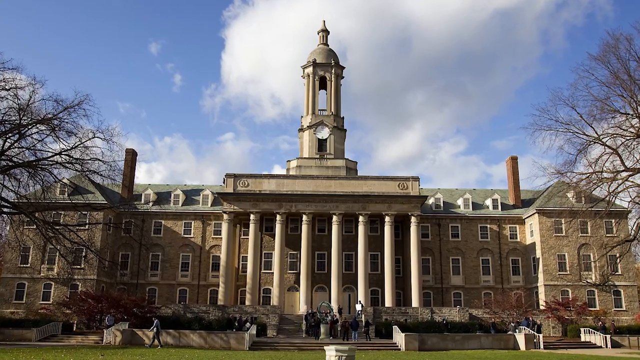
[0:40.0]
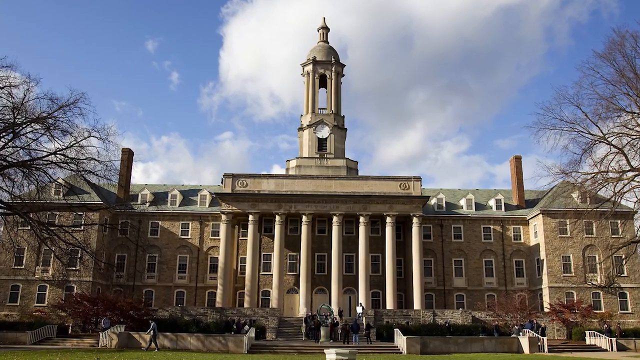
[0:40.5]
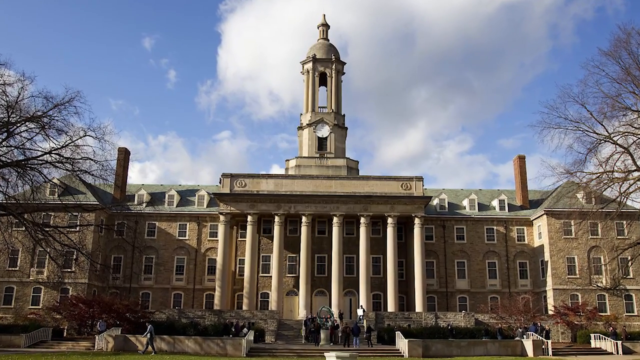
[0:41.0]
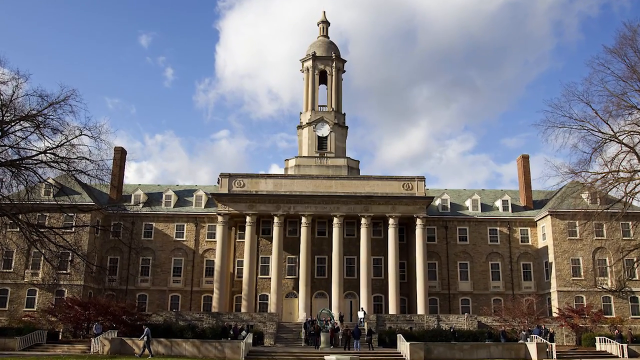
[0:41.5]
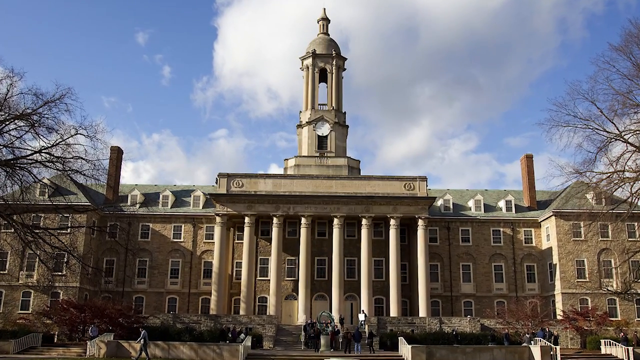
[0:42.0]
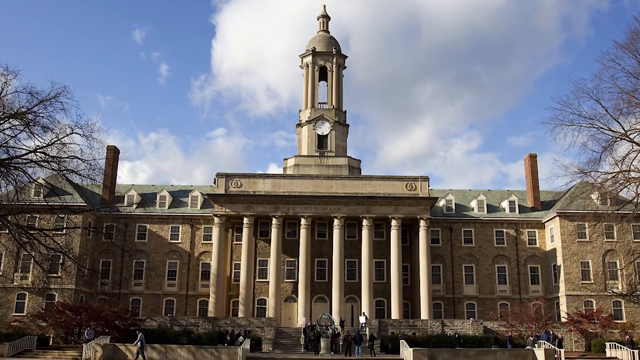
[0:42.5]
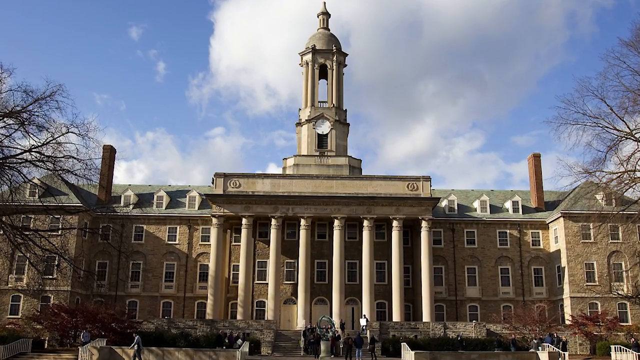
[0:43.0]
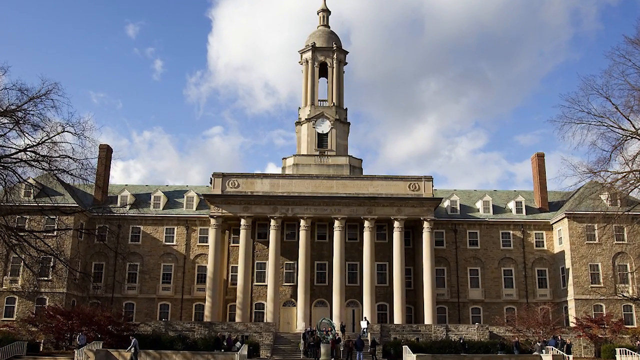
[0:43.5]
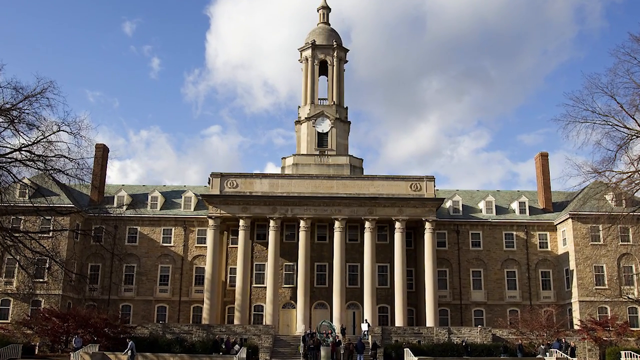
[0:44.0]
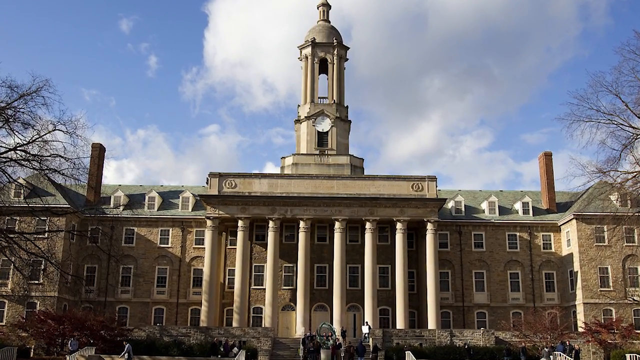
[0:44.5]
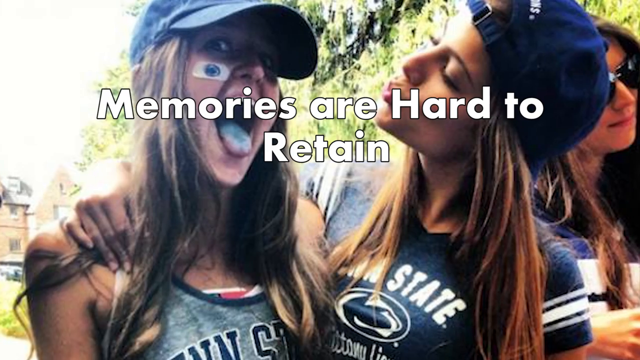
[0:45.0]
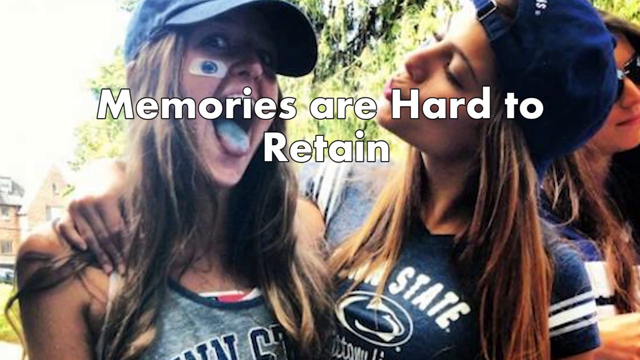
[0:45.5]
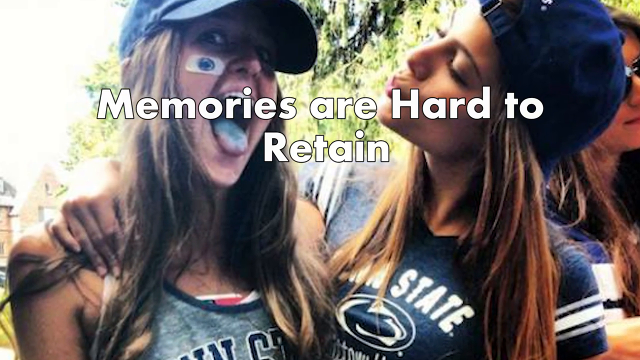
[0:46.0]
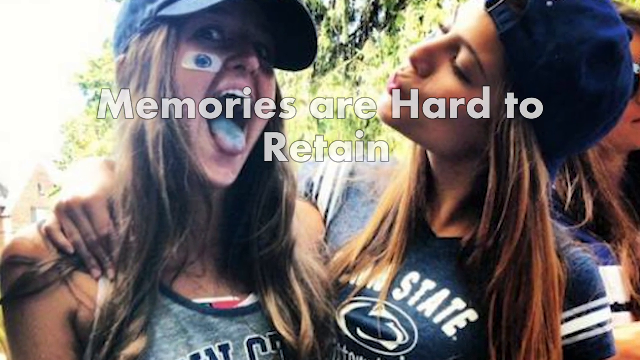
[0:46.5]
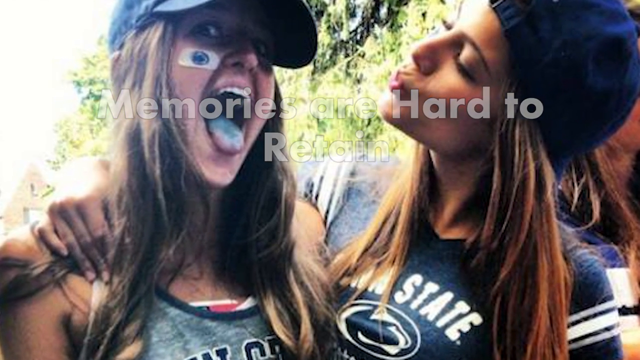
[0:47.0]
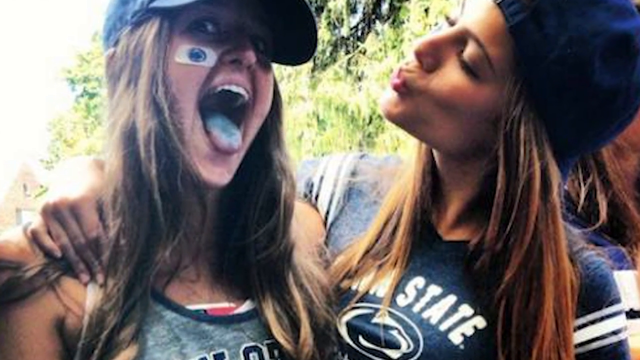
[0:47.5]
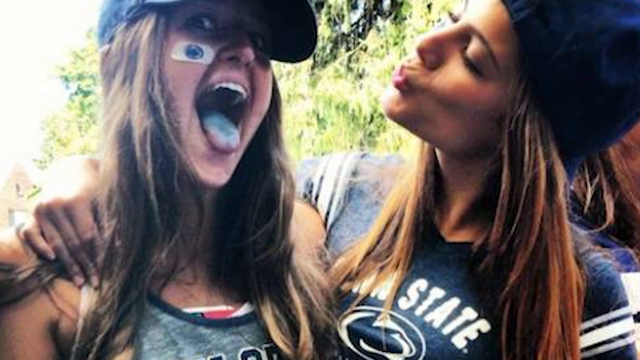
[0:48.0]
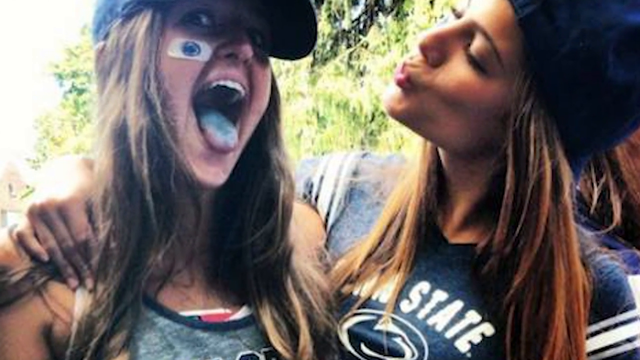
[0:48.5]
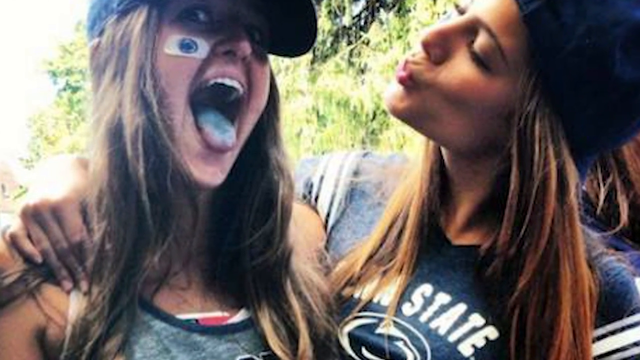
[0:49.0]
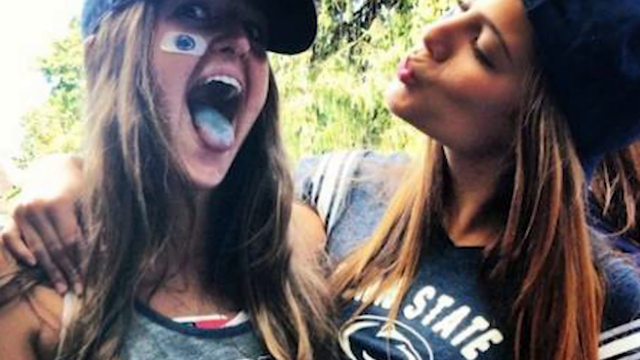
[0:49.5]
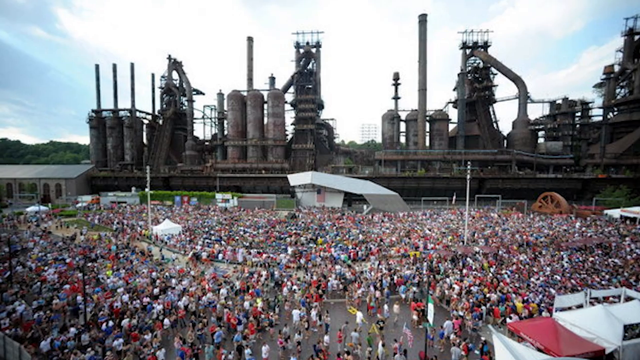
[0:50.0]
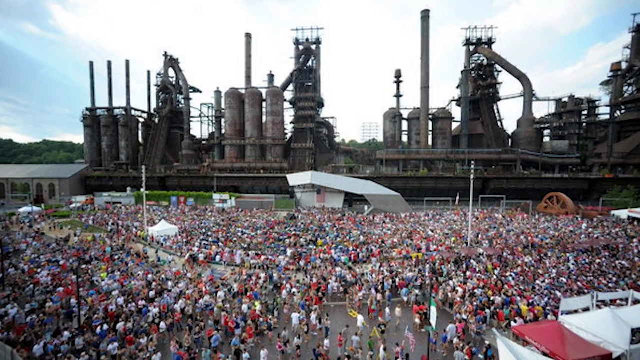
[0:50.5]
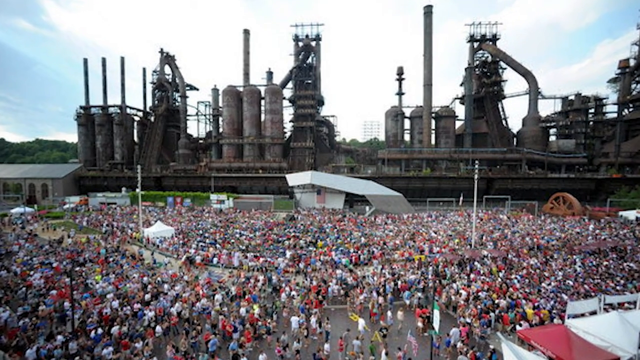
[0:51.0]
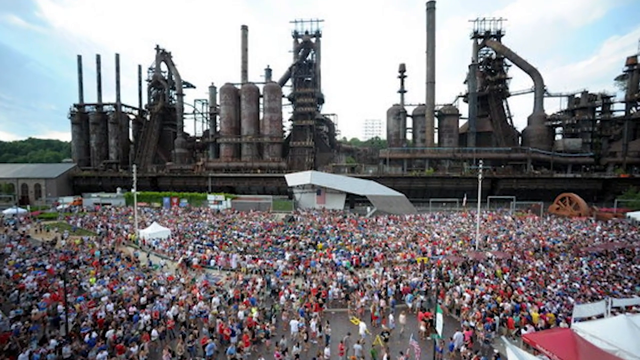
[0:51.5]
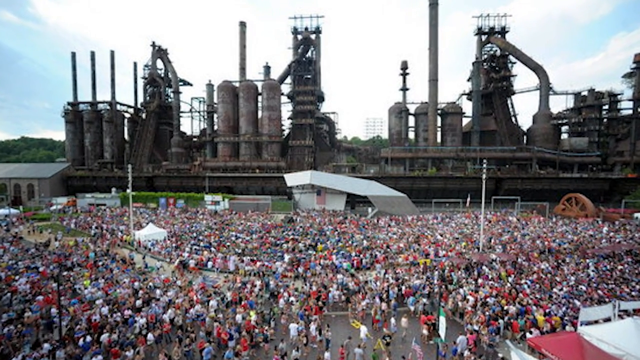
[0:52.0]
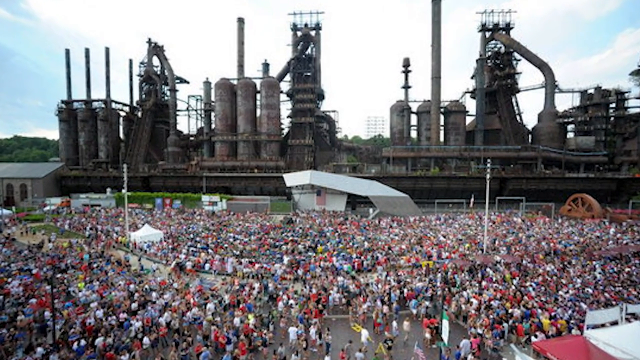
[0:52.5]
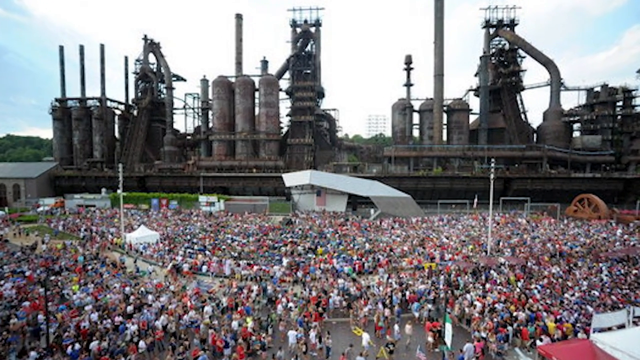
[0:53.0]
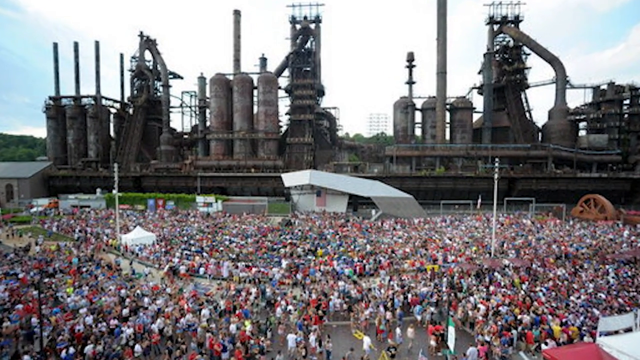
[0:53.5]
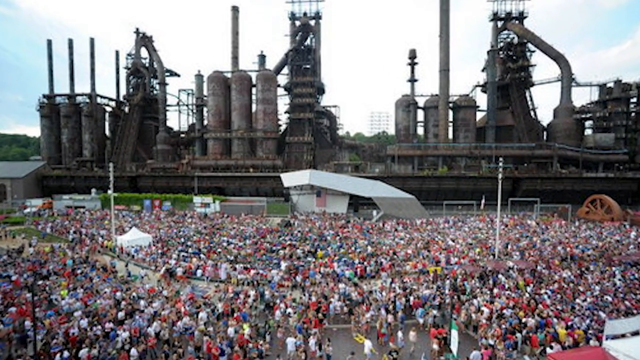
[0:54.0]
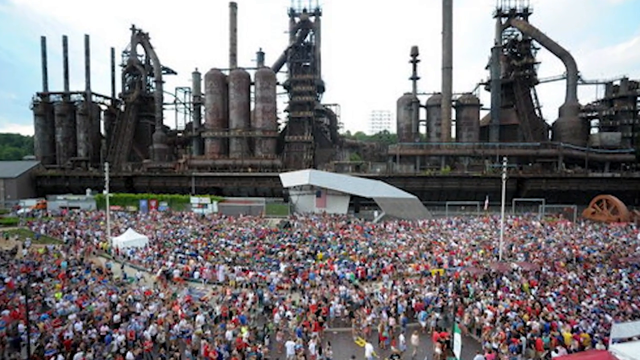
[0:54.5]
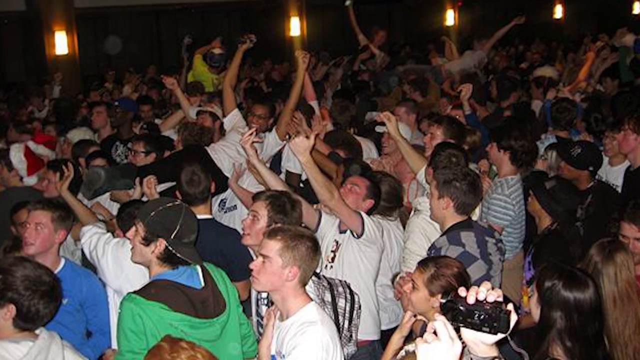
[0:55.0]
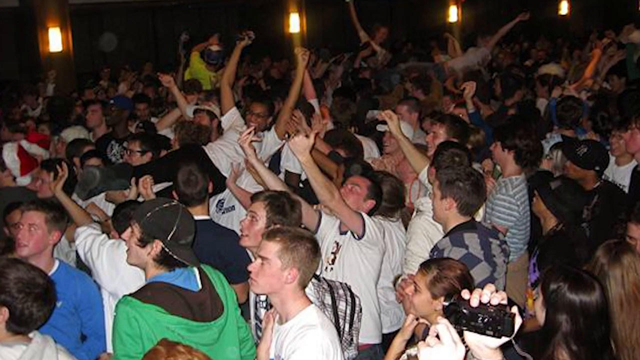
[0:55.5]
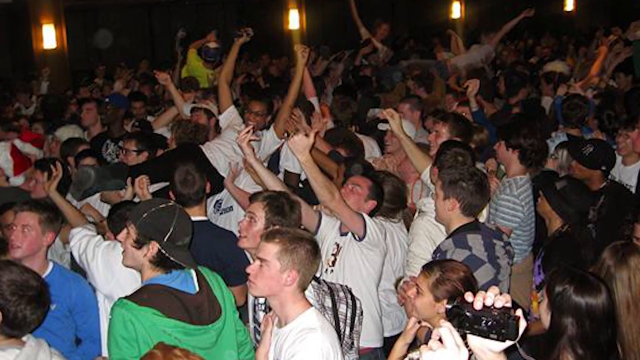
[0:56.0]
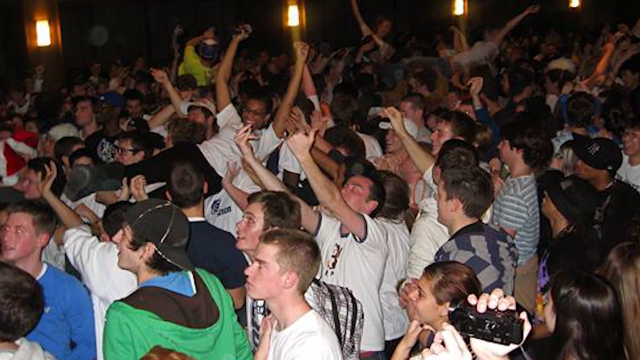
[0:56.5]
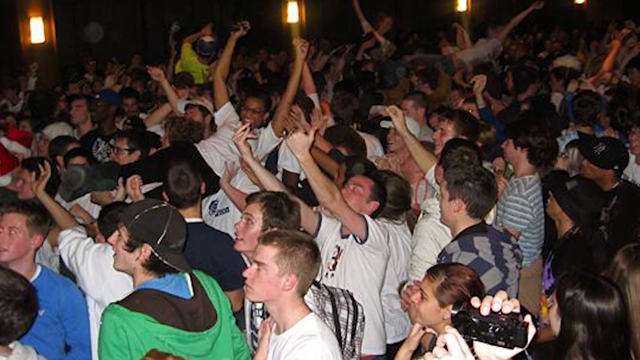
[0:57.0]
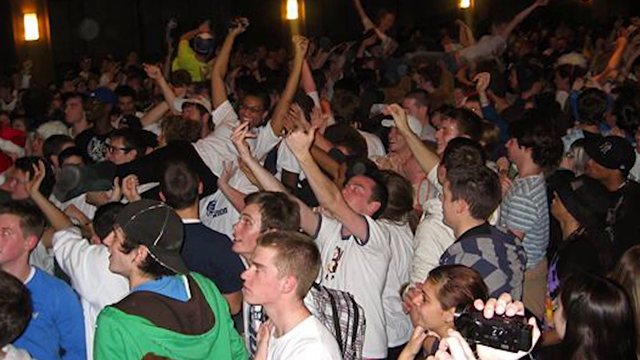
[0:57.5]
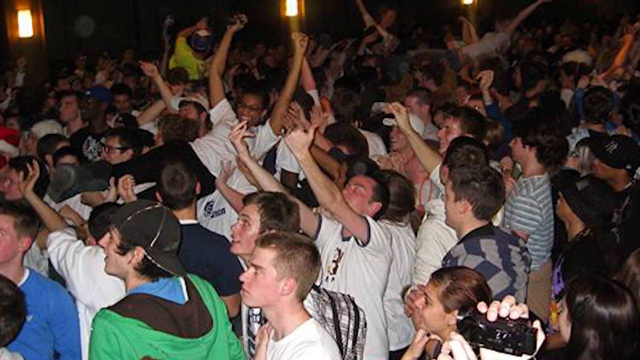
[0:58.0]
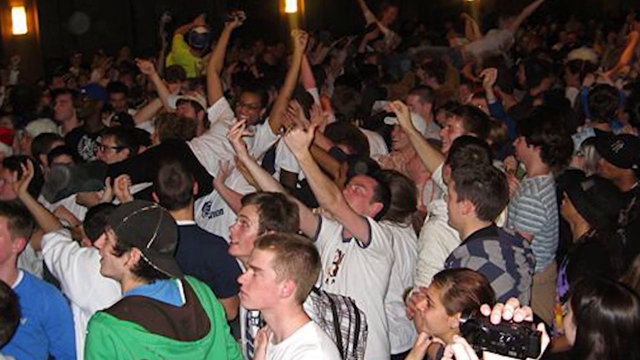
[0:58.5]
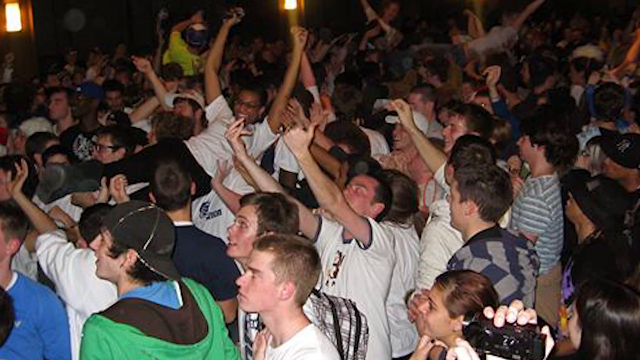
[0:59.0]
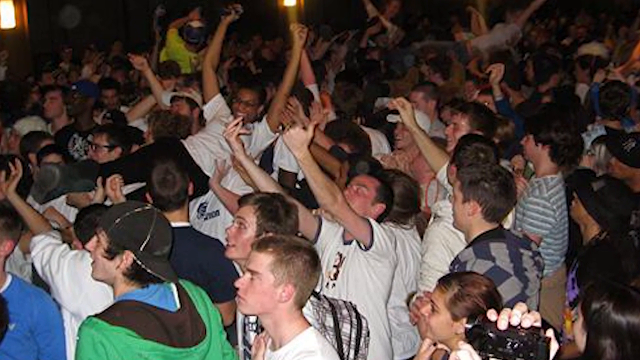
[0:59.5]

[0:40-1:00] The camera gets closer to the university building. Next, two students pose for a photo, making funny faces, with drawings on their faces suggesting a celebration, and text in front of the image reads "memories are hard to retain". Then a large number of students, hundreds of them, are shown in front of a building that looks like a missionary station, with the whole crowd gathered on the outside grounds of the school.